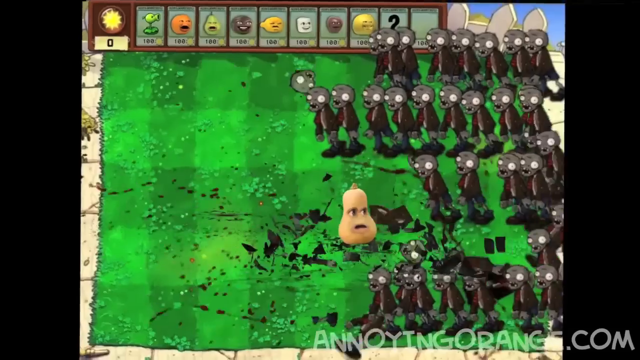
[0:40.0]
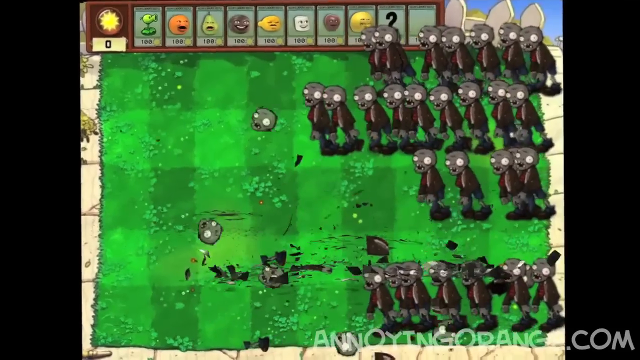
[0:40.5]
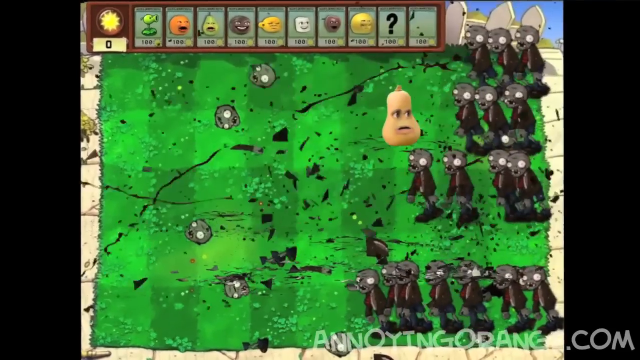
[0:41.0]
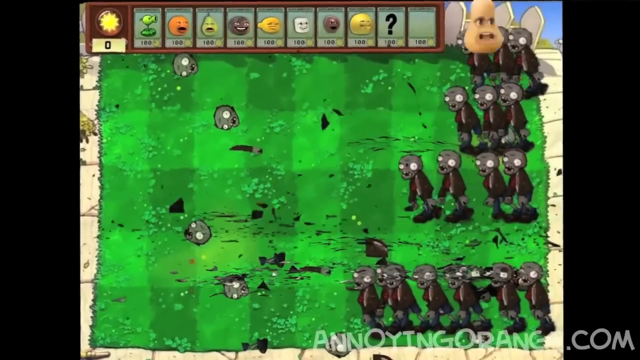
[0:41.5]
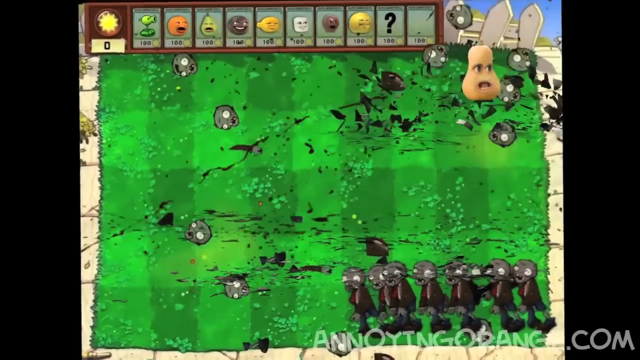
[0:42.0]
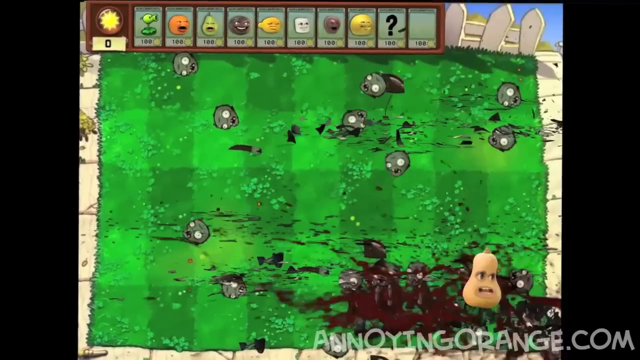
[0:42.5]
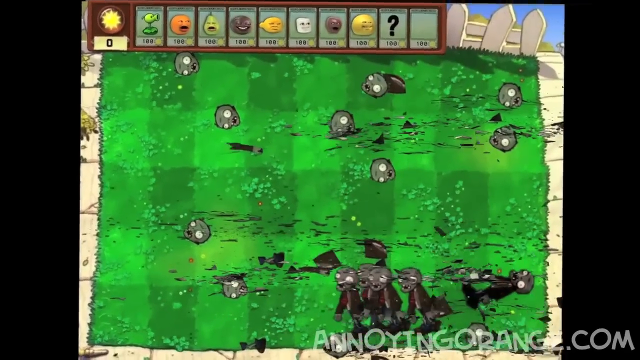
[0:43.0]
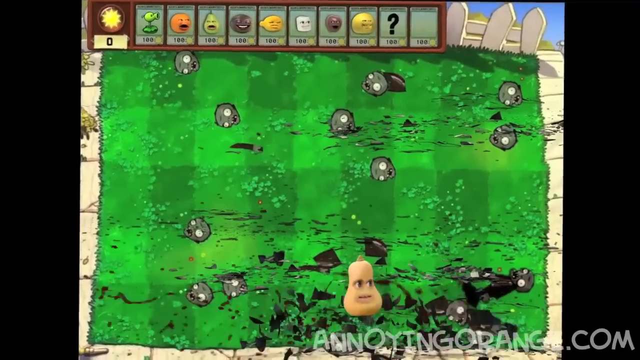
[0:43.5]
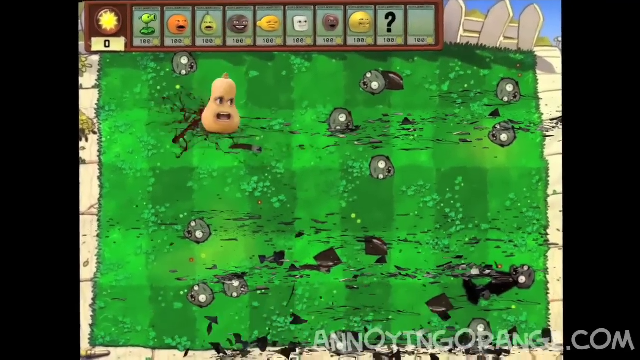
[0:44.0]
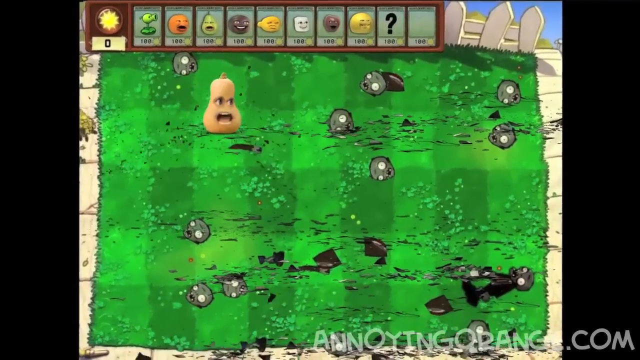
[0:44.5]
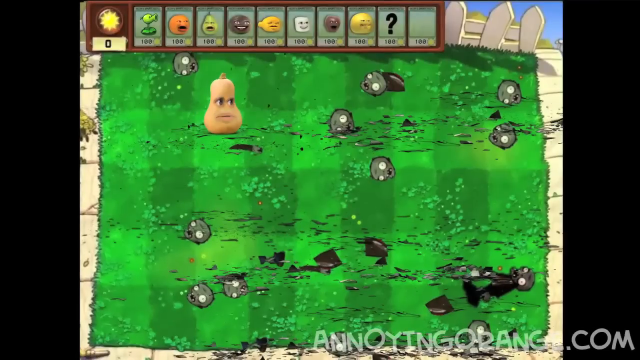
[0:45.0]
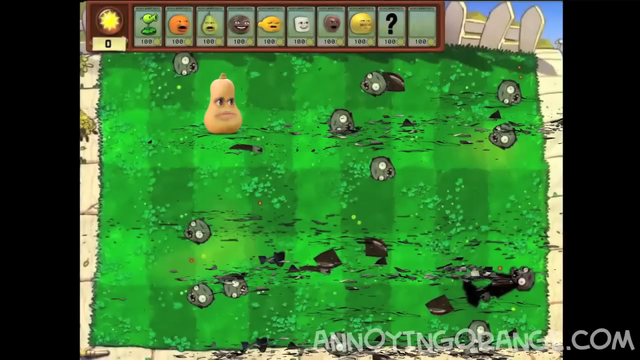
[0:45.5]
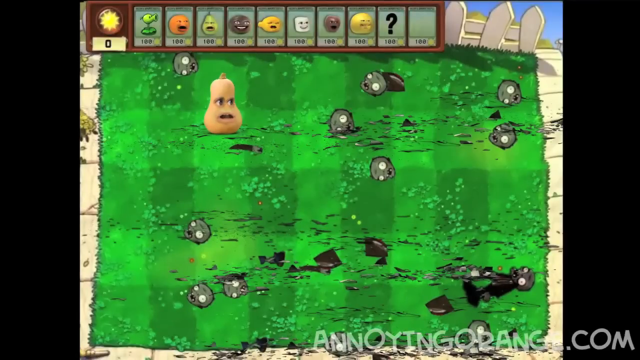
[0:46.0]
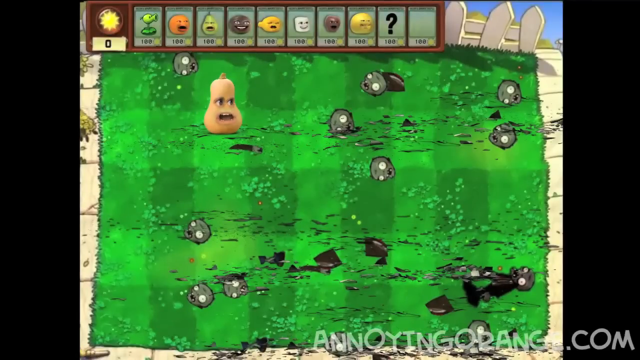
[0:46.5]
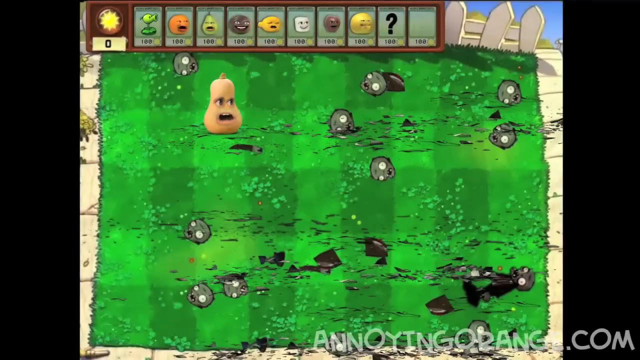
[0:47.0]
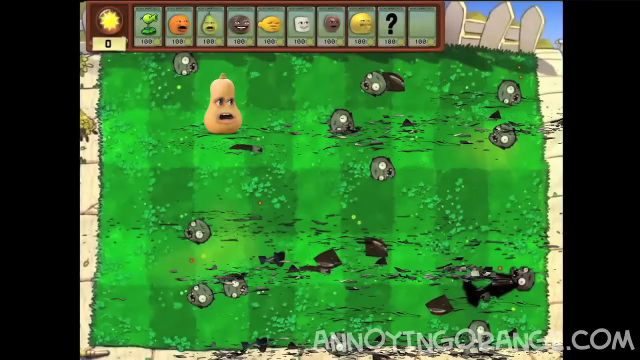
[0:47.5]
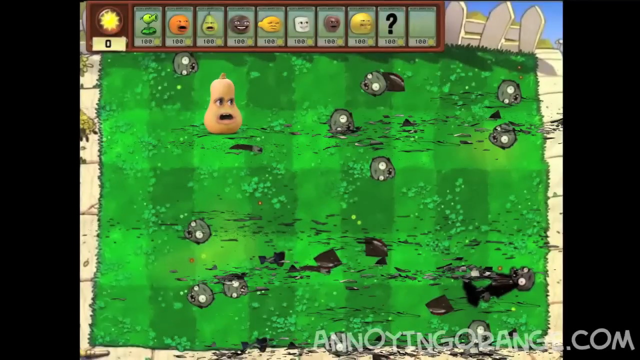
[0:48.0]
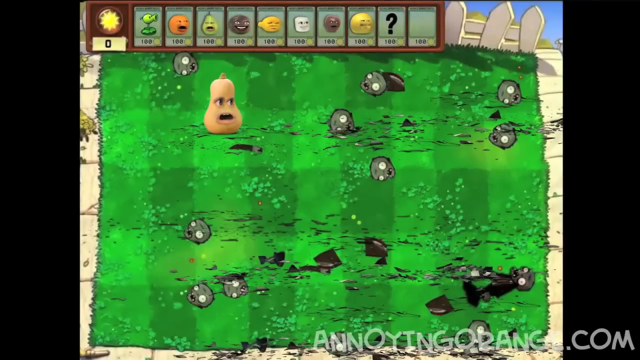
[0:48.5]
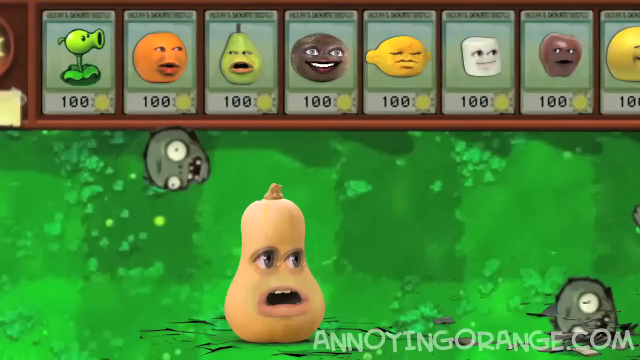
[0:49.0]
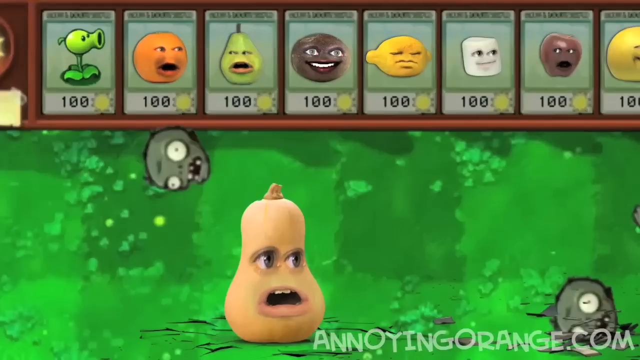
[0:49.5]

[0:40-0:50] The squash's arcing leap to the right and crash to the ground appears to have destroyed some of the zombies. Their heads roll off to the left of the screen, and debris and dark fluid are splashed over the green lawn. The squash leaps into the air again, moves to the right and lands higher up on the screen, again destroying several zombies as it crashes. It leaps once more, crashing down at the top right of the screen and destroying the remaining zombies in that section, their heads rolling on the ground. The squash then comes the full height of the screen down to the bottom right-hand corner of the lawn, destroying more zombies, before leaping up and crashing down in the bottom middle of the screen, destroying the final zombies on screen in a big splatter of blood. It leaps and comes to rest at the top left of the screen, where it resumes speaking. The view then zooms in to show it at the bottom middle of the screen along with the top bar, where the orange is speaking.